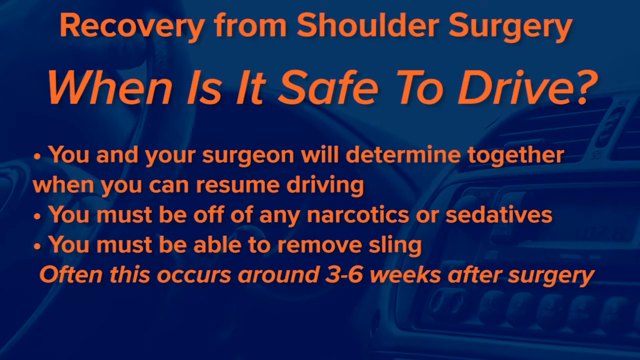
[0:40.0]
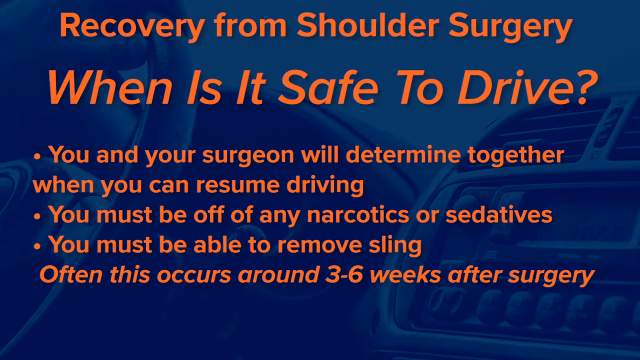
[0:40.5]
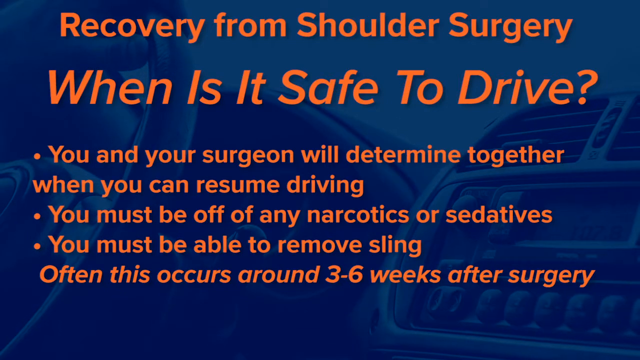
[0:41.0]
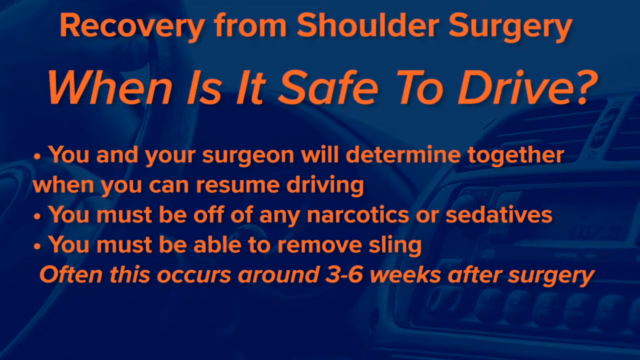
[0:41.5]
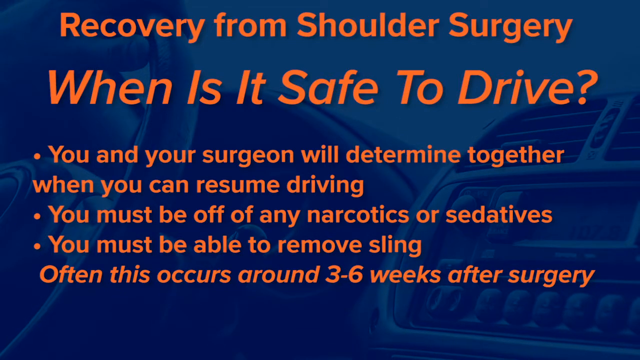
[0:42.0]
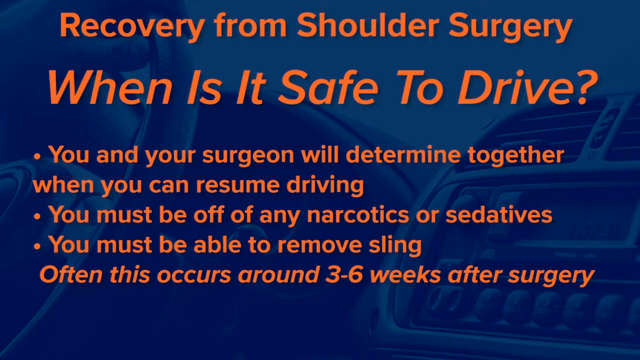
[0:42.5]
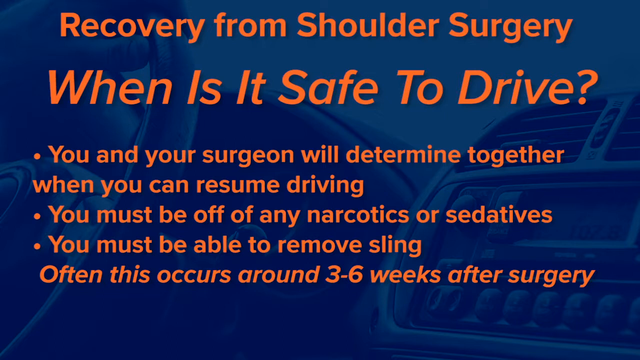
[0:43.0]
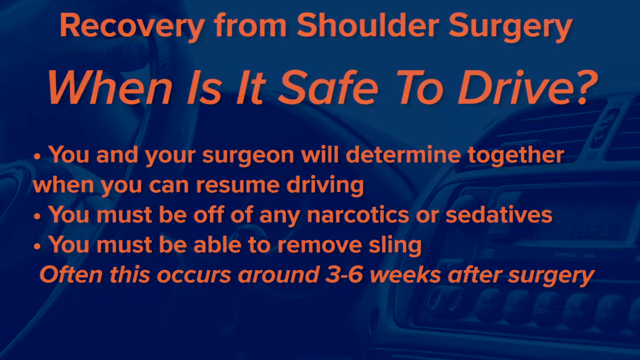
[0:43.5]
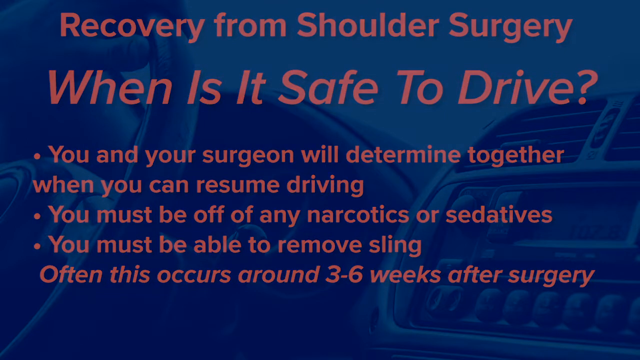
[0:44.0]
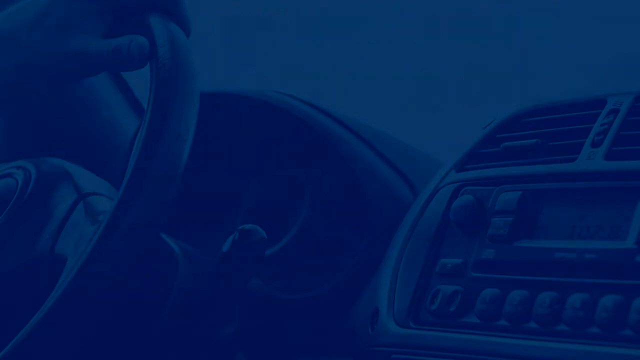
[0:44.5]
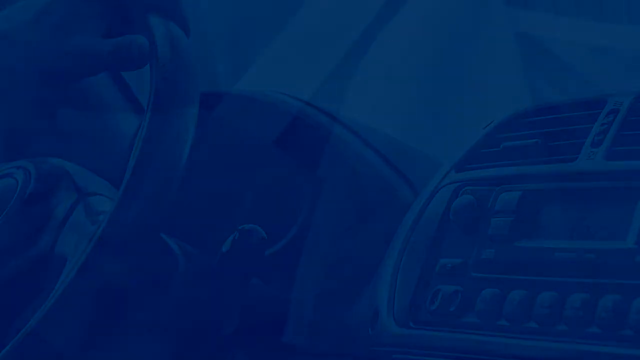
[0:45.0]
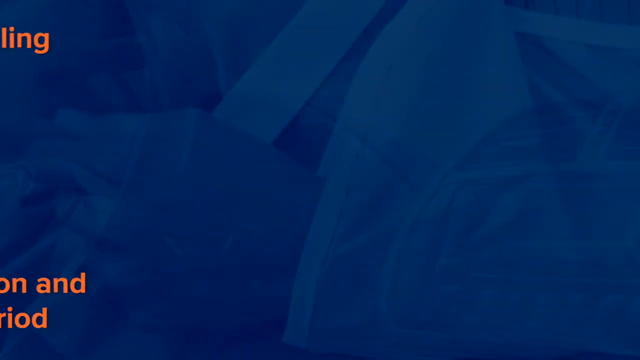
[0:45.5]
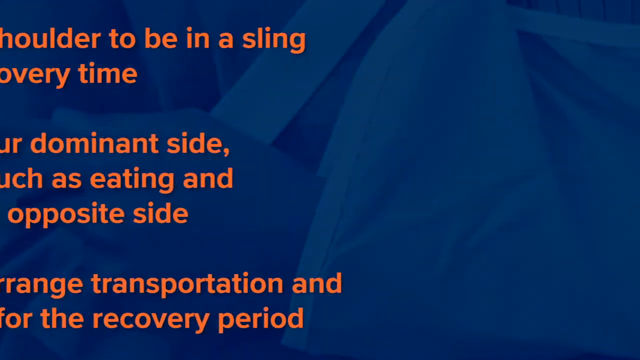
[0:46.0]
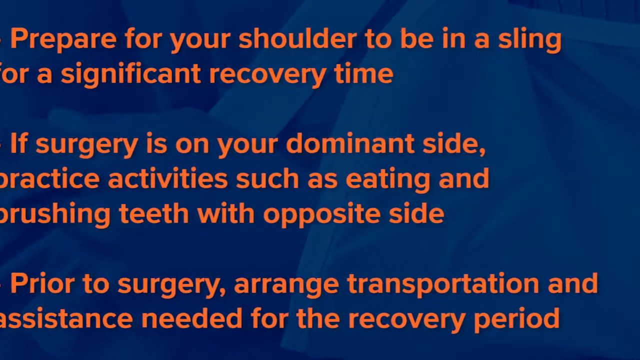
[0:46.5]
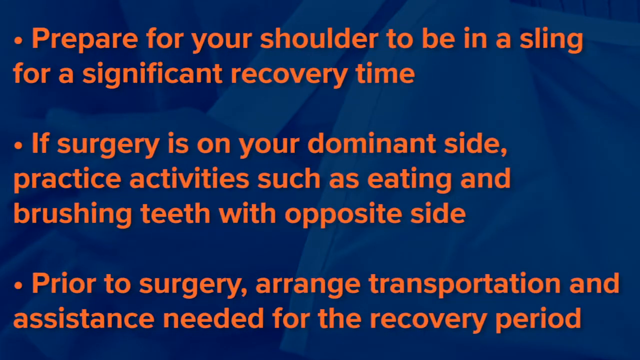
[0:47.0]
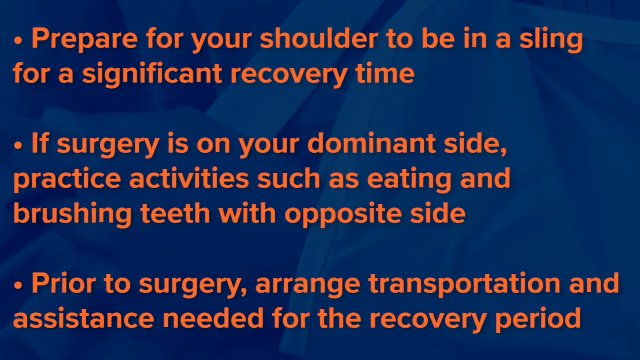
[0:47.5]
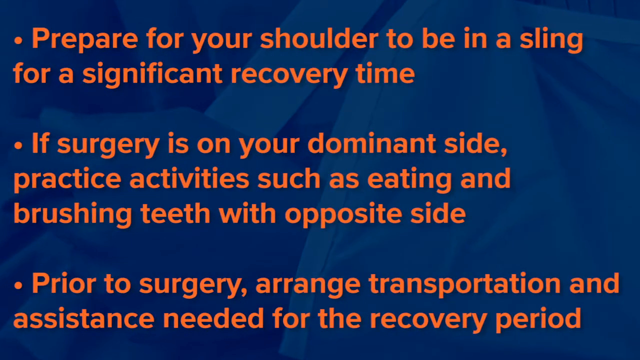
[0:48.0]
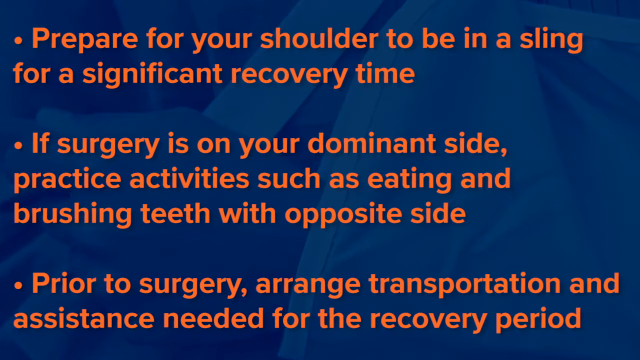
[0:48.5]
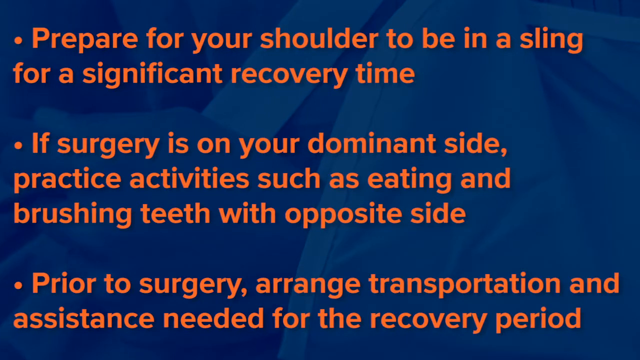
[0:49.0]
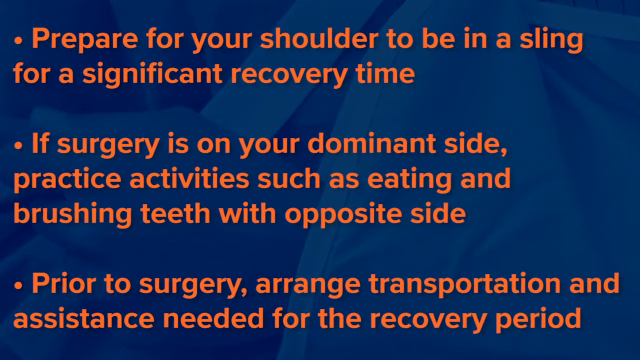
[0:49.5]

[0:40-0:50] The screen shows the text "recovery from shoulder surgery. When is it safe to drive?" along with the lines about resuming driving, being off any narcotics or sedatives, being able to remove the sling, and this often occurring around three to six weeks after surgery. In the background, a person's left hand is on the upper right portion of a steering wheel, with the car's console and dashboard behind it. Next, the words appear: "prepare for your shoulder to be in a sling for a significant recovery time. If surgery is on your dominant side, practice activities such as eating, brushing teeth with the opposite side. Prior to surgery, arrange transportation and assistance needed for the recovery period."